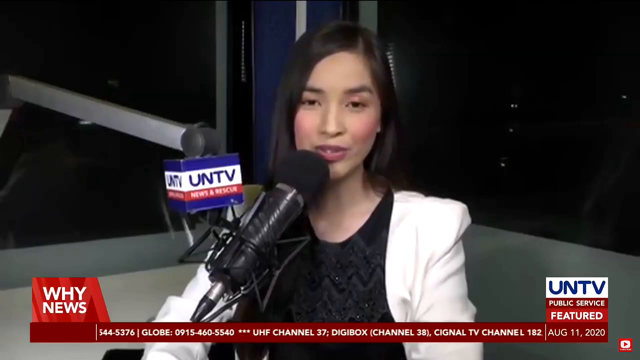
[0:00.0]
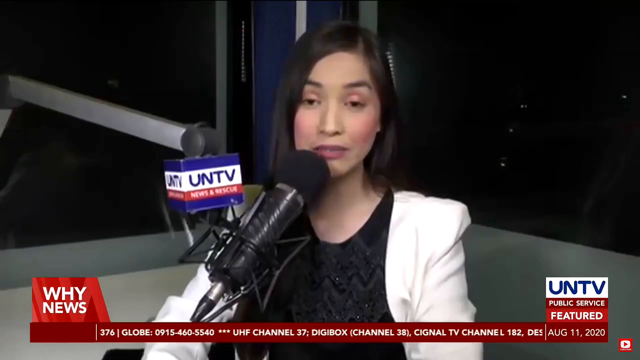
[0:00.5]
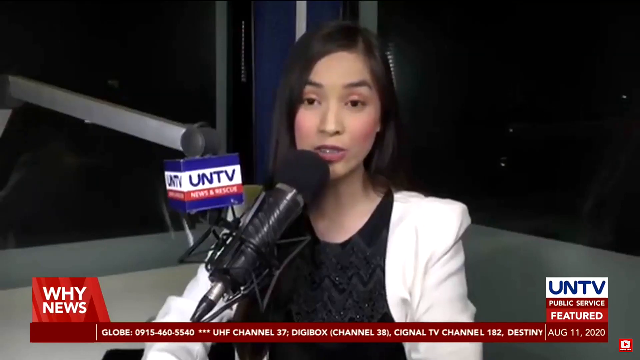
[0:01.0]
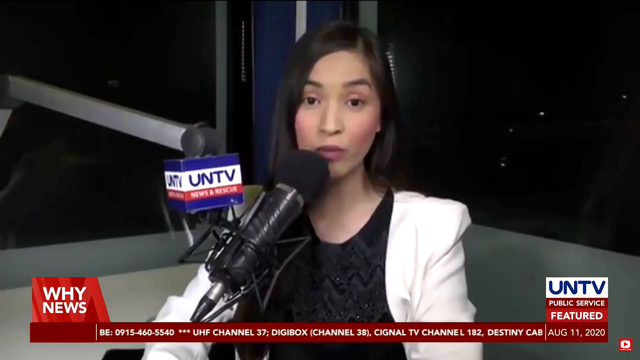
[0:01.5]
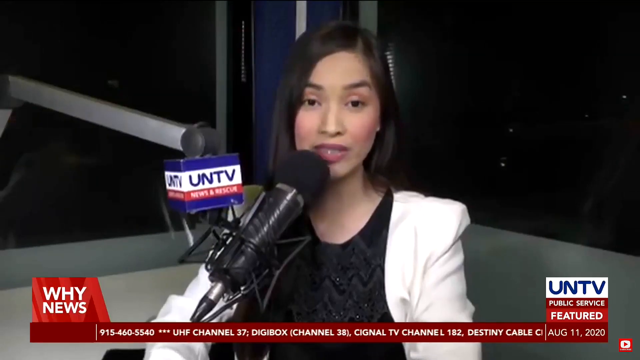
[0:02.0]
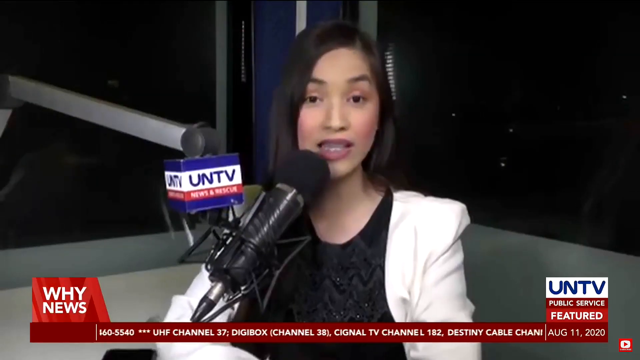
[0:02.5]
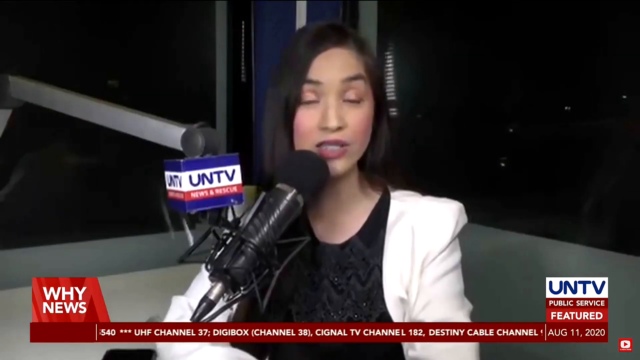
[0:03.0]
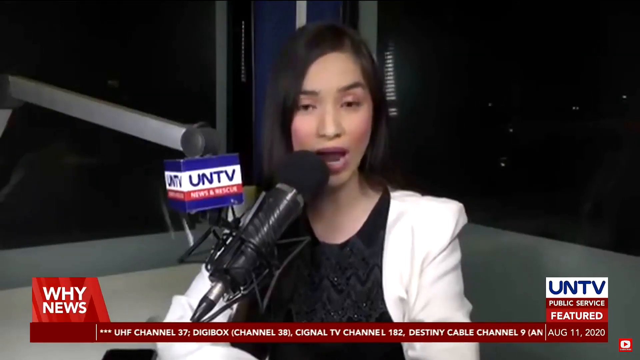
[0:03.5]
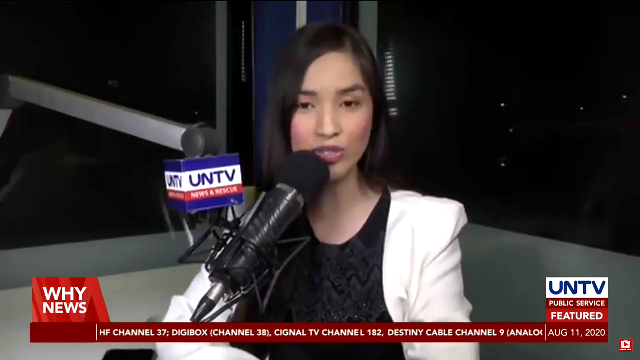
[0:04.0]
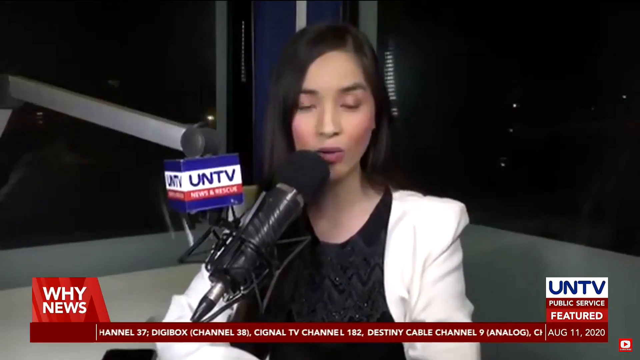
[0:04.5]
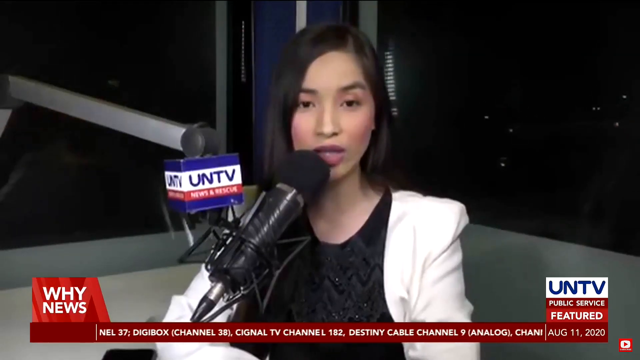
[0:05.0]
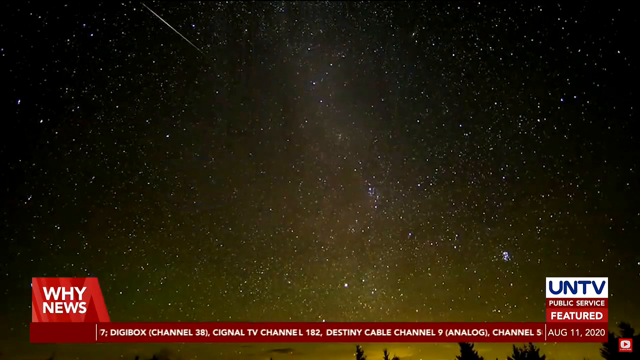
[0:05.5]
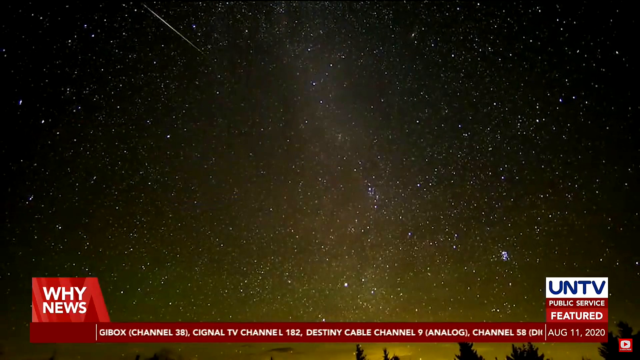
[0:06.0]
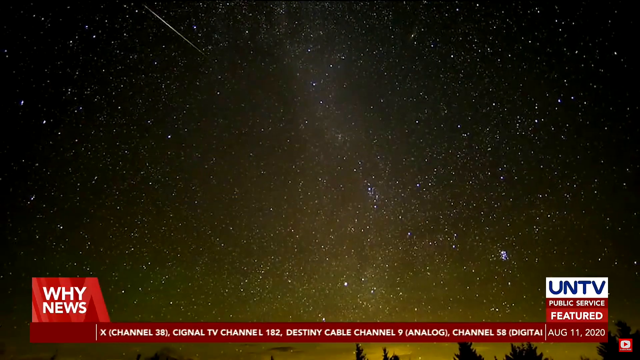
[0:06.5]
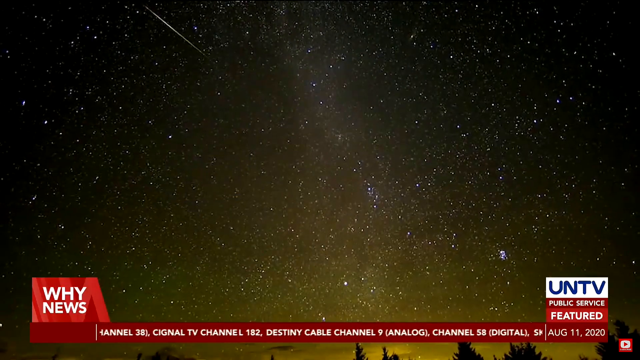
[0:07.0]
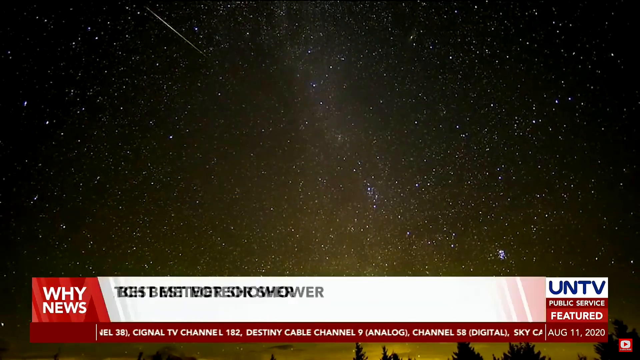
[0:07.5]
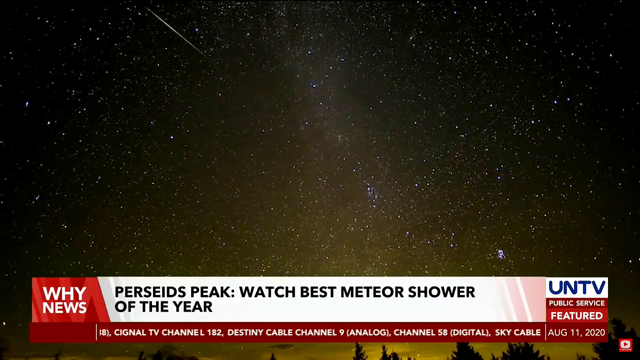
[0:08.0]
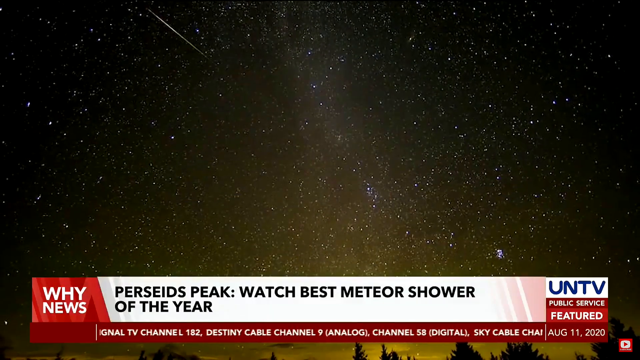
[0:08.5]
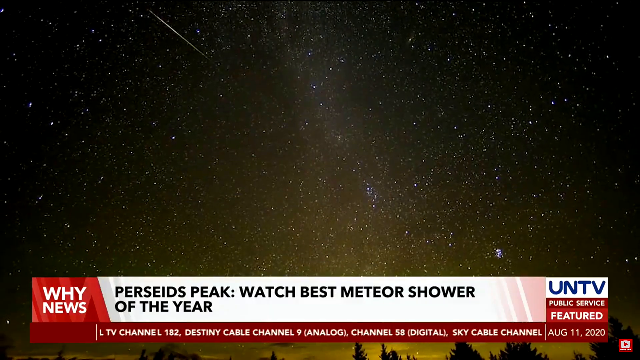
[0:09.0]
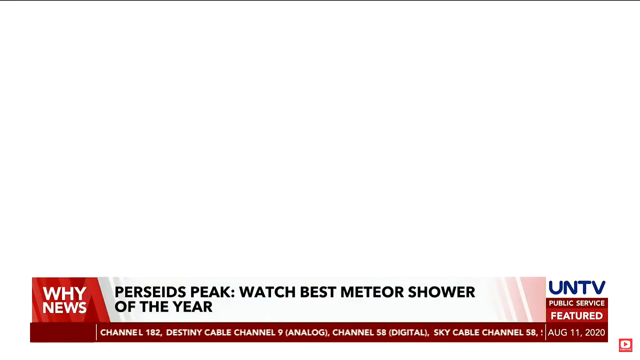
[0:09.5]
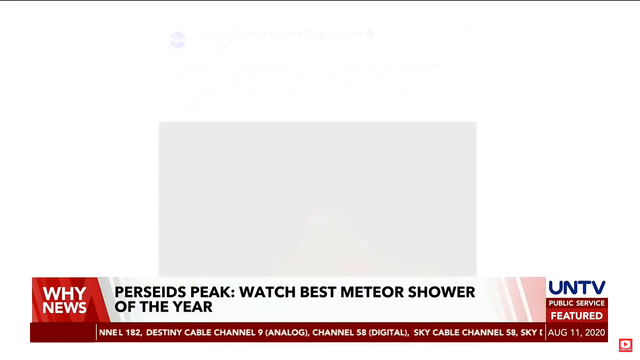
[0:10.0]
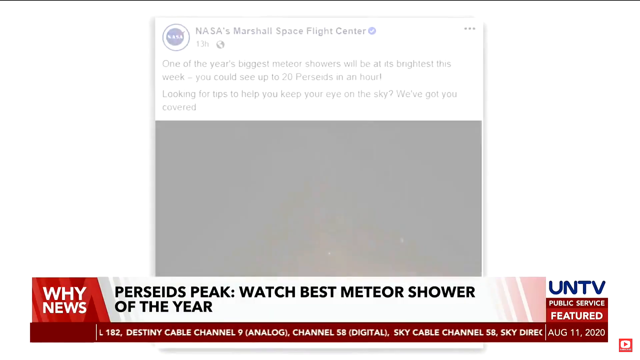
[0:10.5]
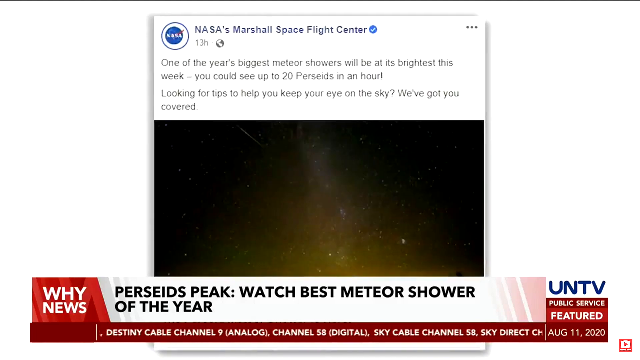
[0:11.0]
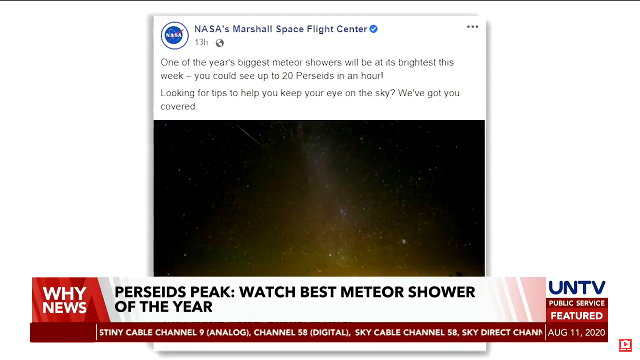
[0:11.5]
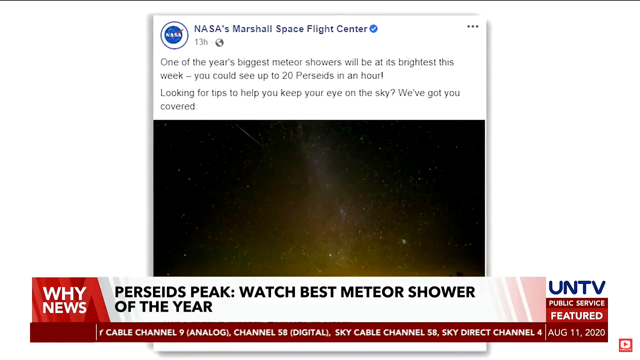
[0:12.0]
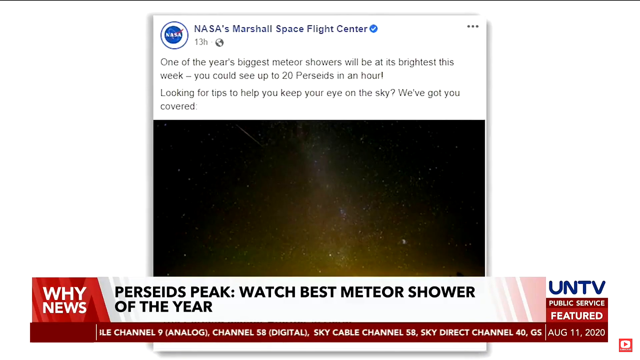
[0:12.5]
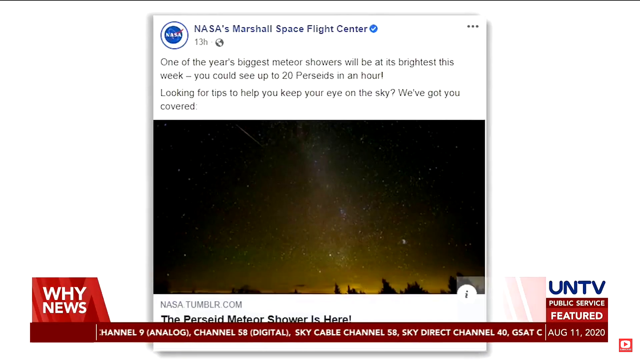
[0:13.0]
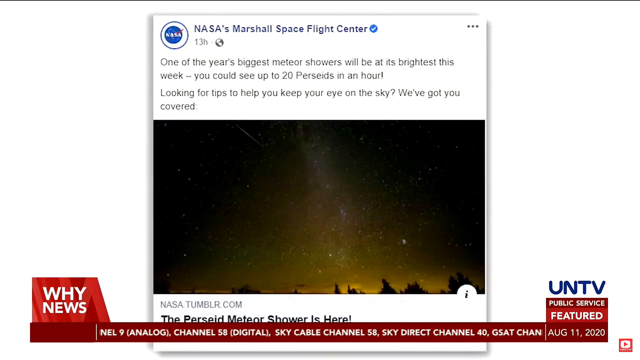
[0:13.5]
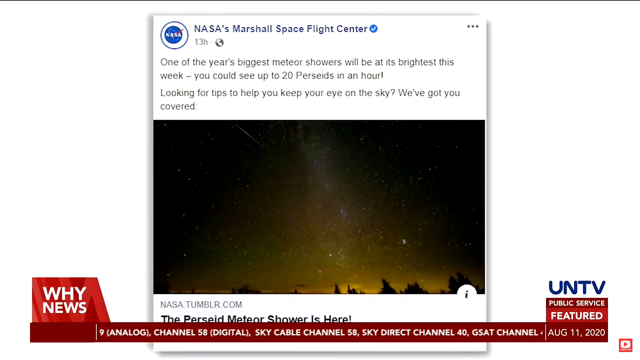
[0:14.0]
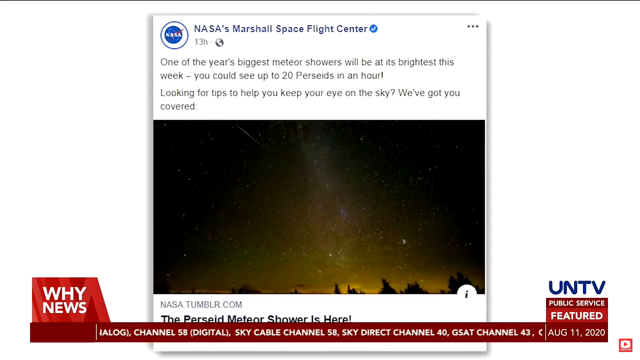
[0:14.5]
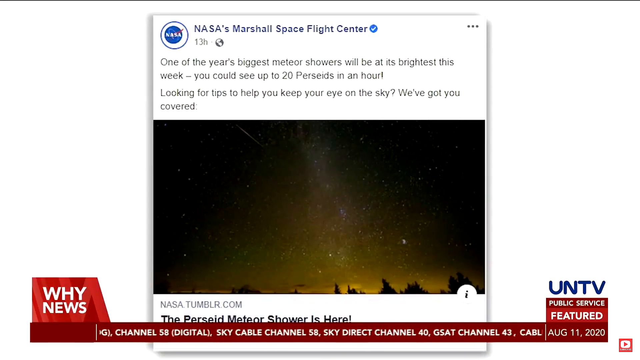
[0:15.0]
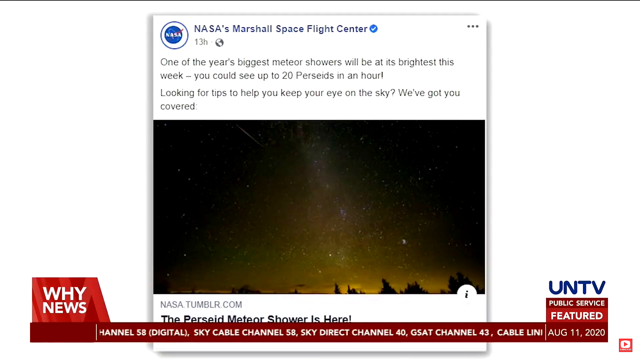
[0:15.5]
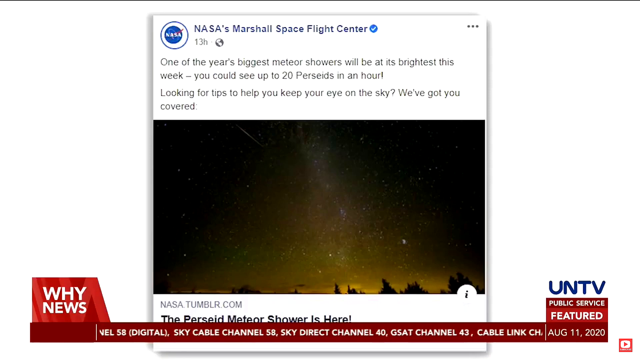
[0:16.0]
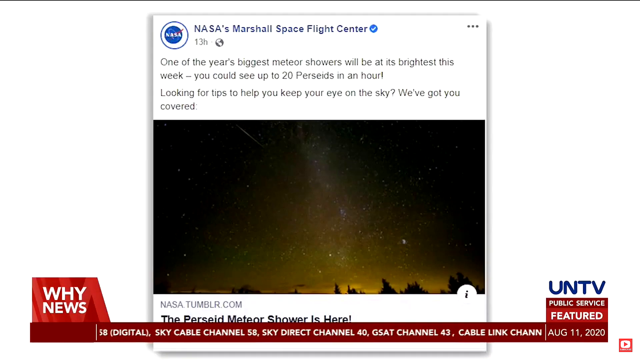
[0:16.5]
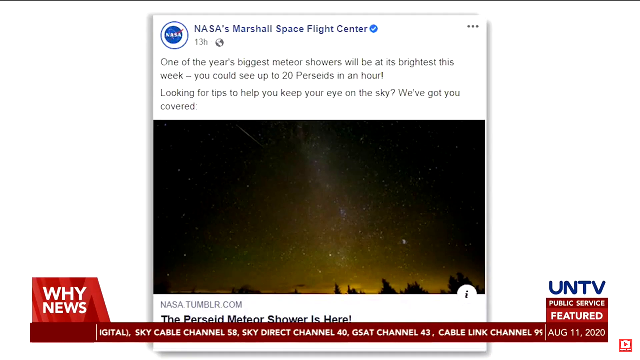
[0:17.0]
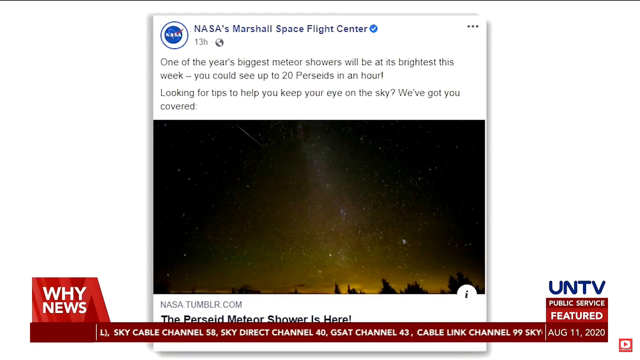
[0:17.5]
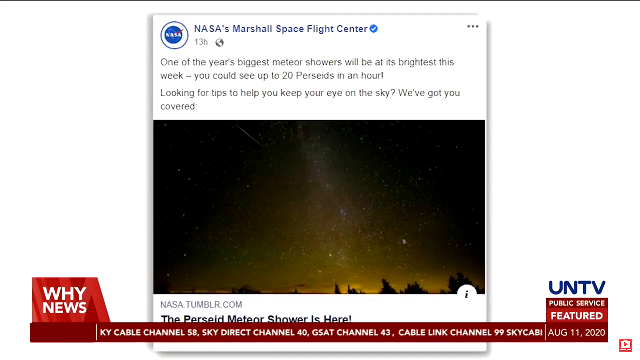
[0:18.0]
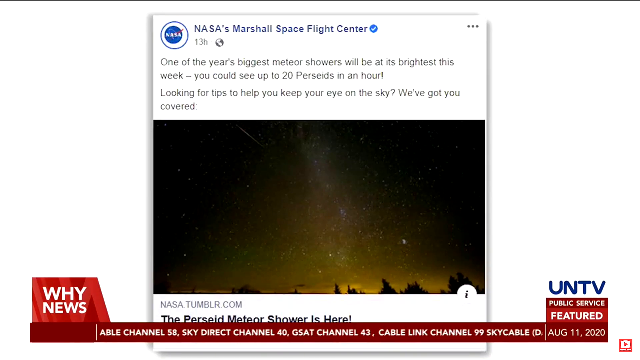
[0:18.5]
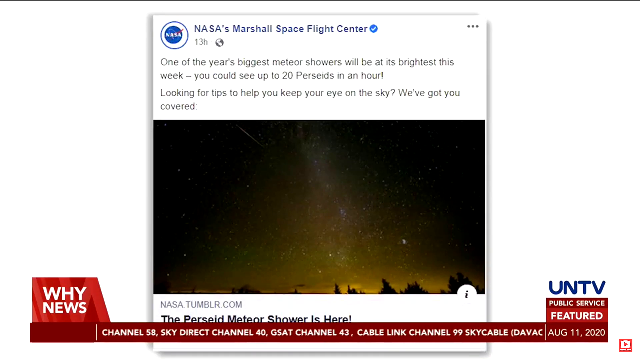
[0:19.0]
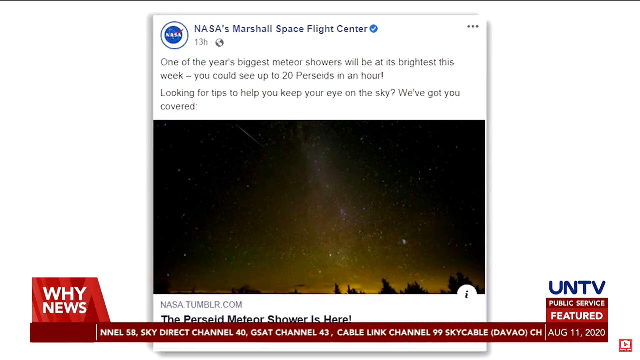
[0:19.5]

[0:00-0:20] A meteorologist presents a news update. She wears a white blazer and a black top and stands in front of a microphone. The broadcast is from UN TV. A sky is then shown, along with a title about the peak of the best shower of the year. Next comes a post from NASA Marshall Space Flight Center saying that one of the year's biggest meteor showers will be at its brightest this week and that up to 20 could be seen in an hour. The post also mentions tips to help keep an eye on the sky and says "we've got you."